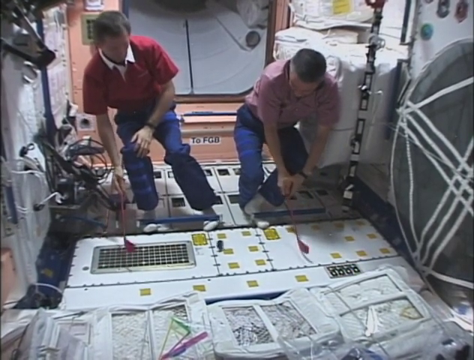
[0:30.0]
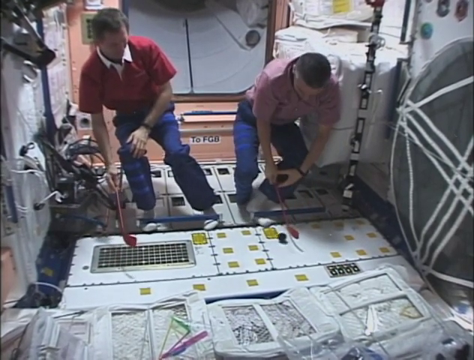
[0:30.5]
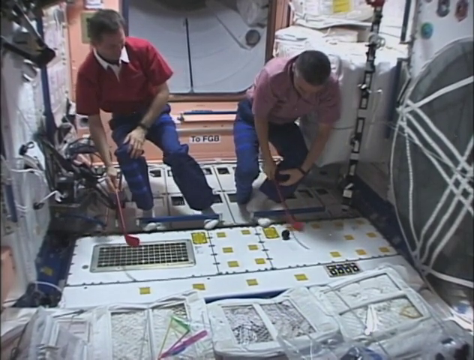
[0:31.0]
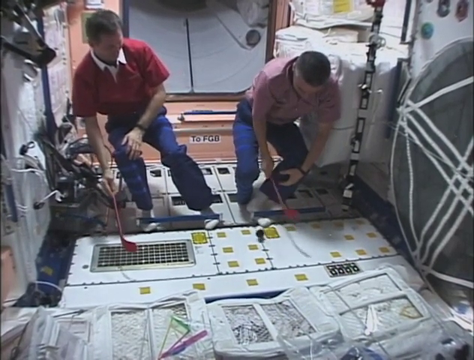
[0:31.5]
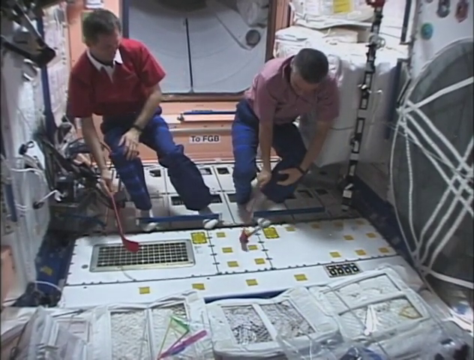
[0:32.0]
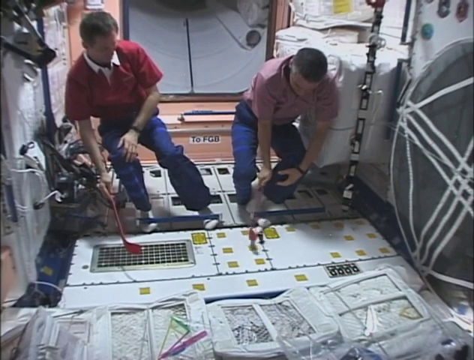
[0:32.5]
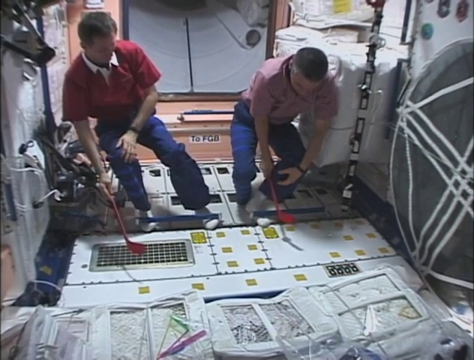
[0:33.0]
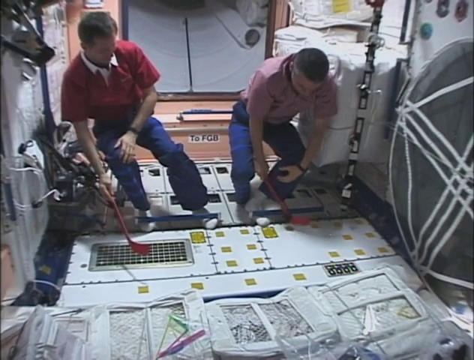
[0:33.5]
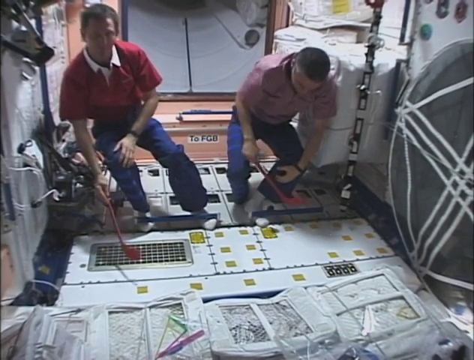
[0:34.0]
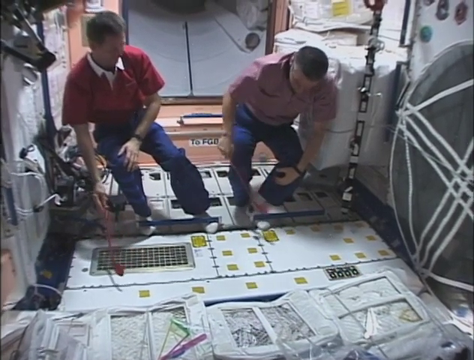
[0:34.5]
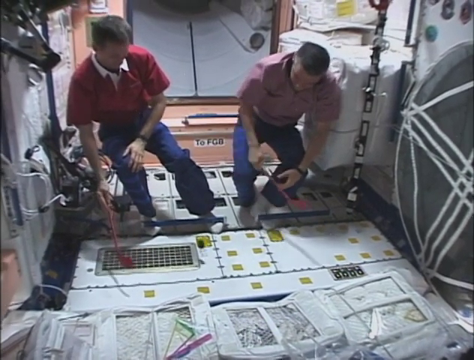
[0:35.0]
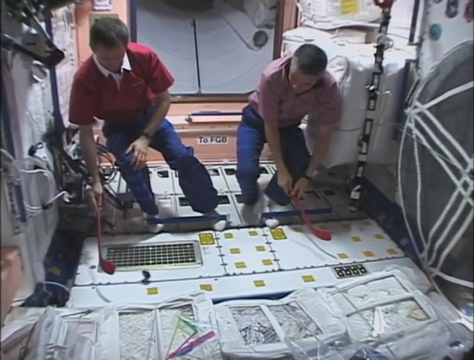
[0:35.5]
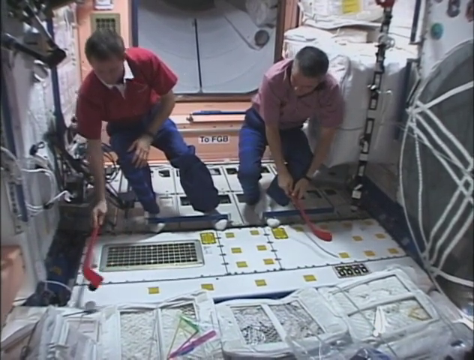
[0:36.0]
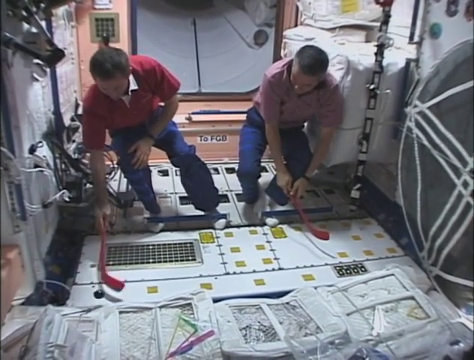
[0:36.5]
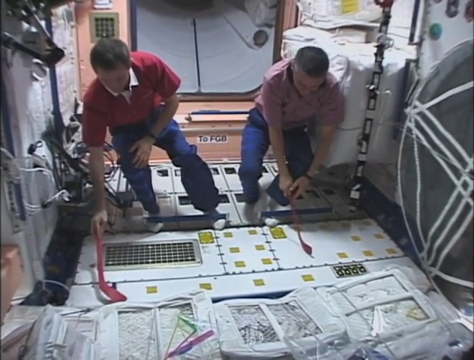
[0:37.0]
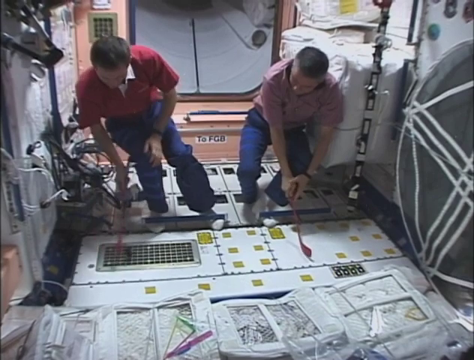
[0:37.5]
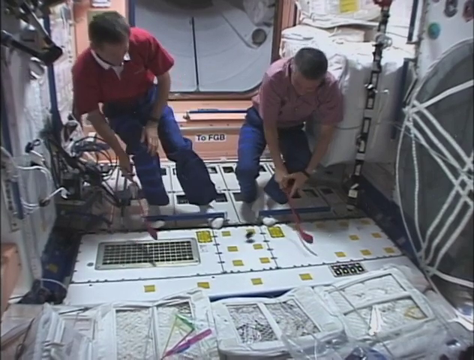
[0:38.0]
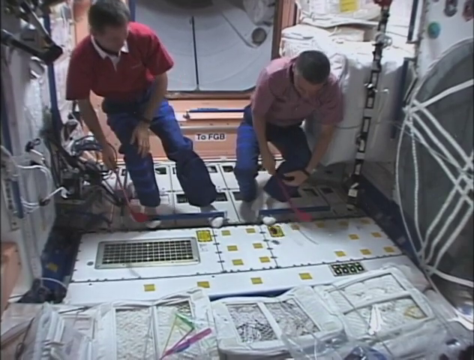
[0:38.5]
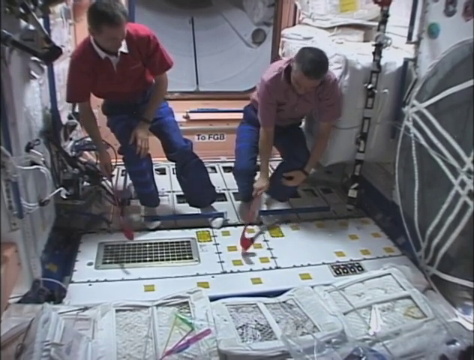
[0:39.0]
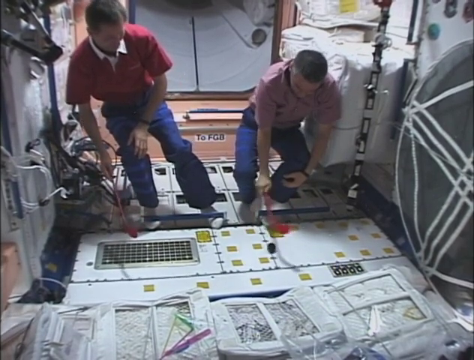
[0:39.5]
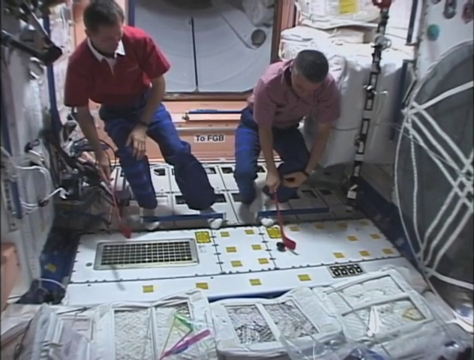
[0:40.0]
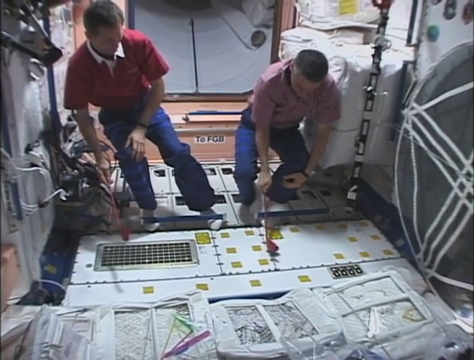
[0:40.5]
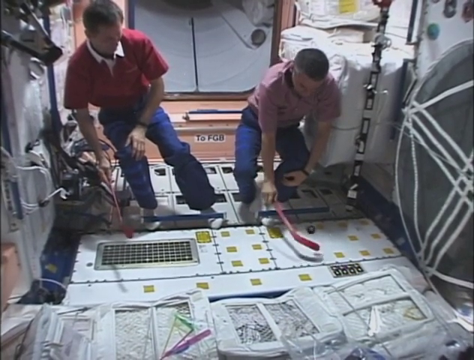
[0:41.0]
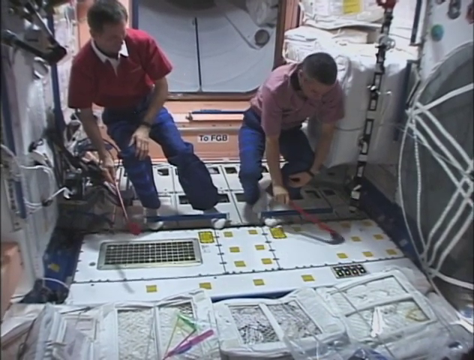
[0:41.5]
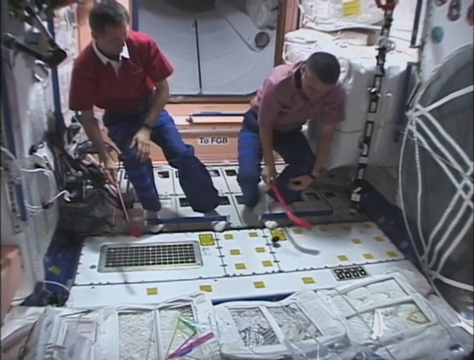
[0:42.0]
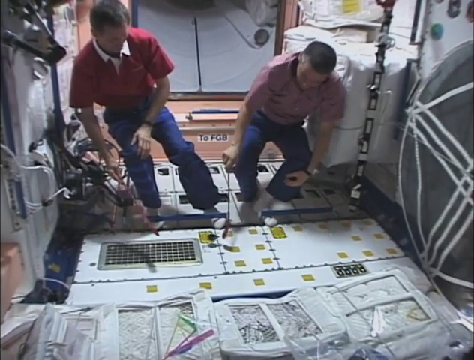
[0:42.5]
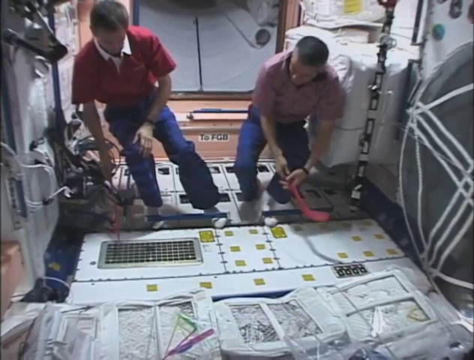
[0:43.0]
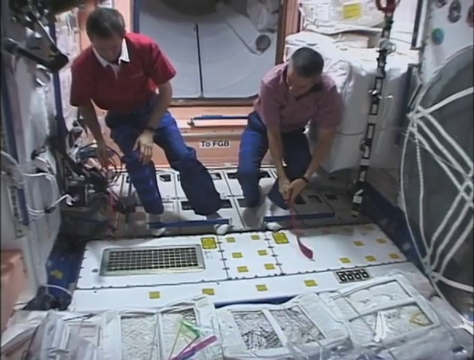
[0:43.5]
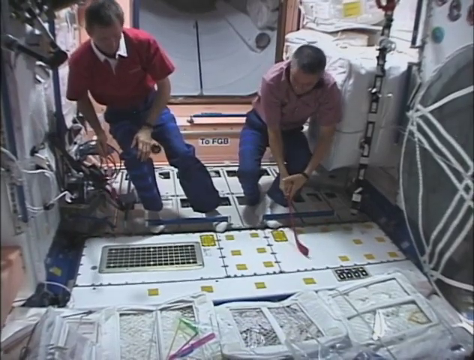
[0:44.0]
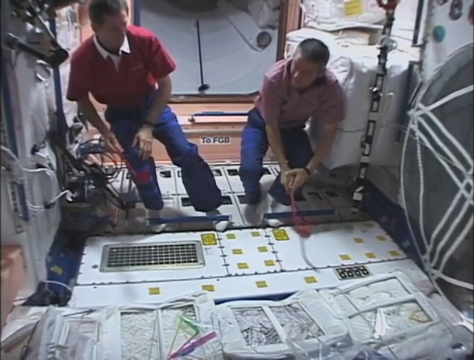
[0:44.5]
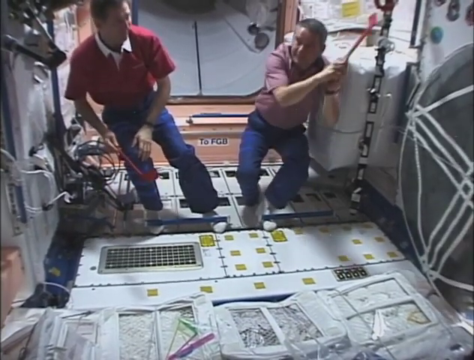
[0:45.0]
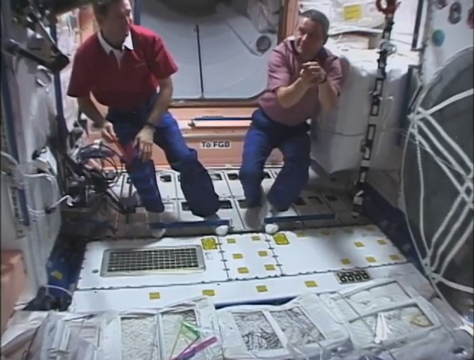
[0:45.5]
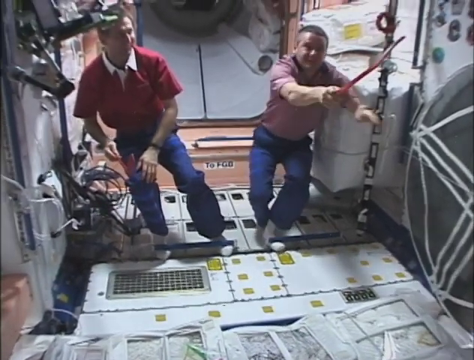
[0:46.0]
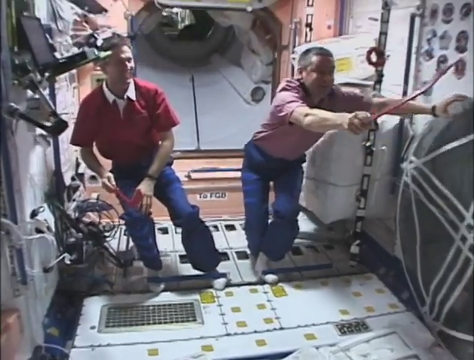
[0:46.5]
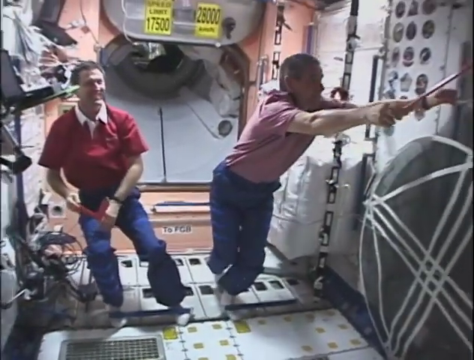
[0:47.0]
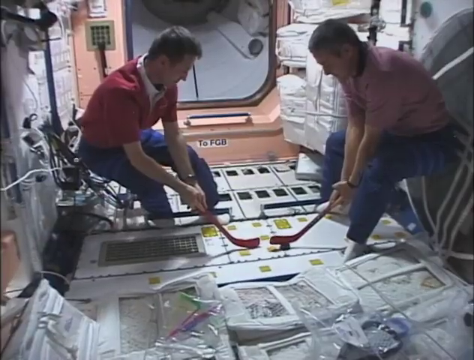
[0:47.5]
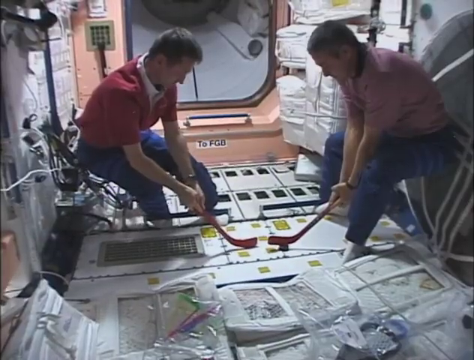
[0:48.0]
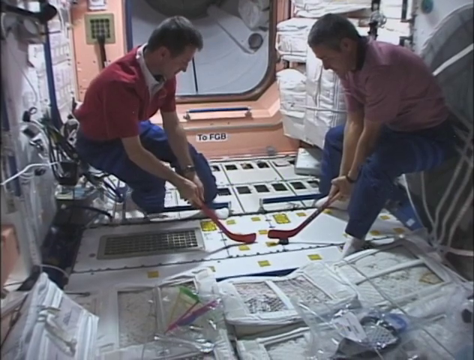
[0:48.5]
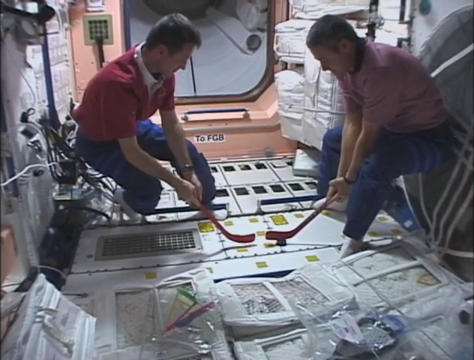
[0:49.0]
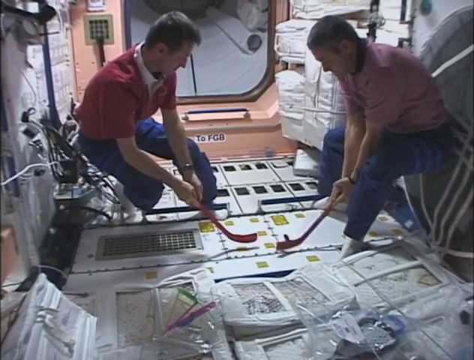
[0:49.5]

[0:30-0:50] The men, in socks with their knees bent, play as the puck hovers just above the ground surface. On the ground are white rectangles with some yellow-green squares on them. In one area there is a cover over something that looks sort of like a caged-in cover. On the left side, wires hang off the wall, and on the right side there appears to be a big stack of perhaps towels or something. In the foreground is a white rectangular item with rectangular cutouts and a white center strip. The men play hockey in this environment, trying to keep the puck down. The puck hits the ground and bounces up, the man on the right tries to steady it, and the puck flies away out of reach; the man on the right goes after it as it goes out of view toward the viewer.